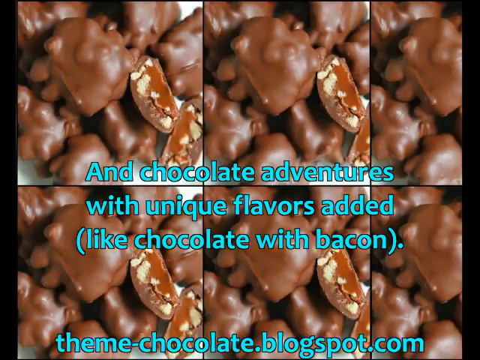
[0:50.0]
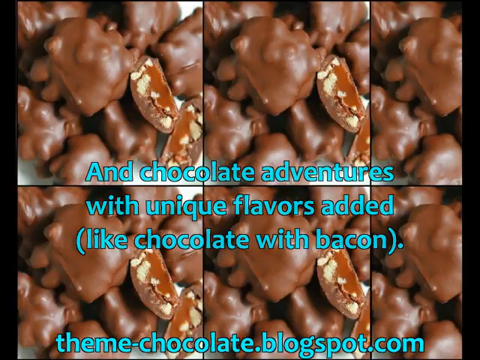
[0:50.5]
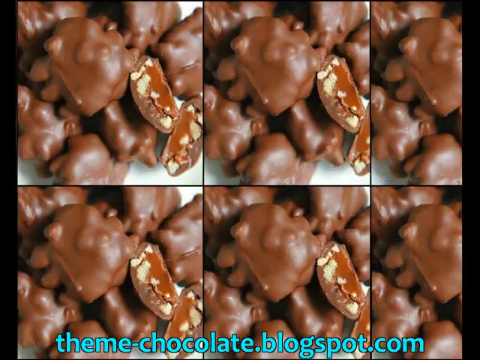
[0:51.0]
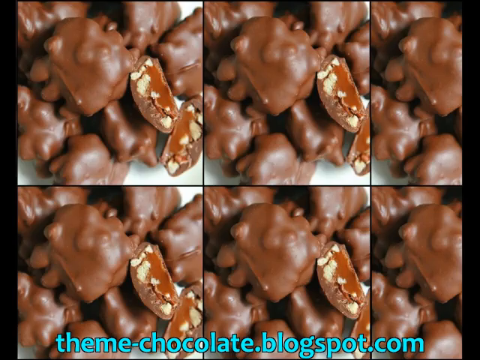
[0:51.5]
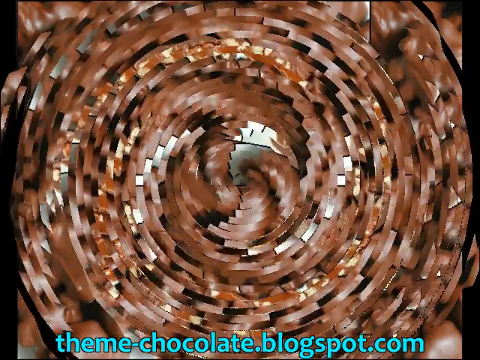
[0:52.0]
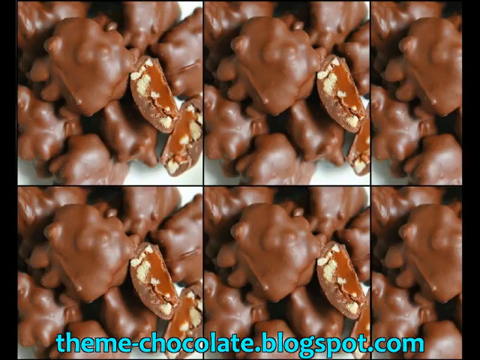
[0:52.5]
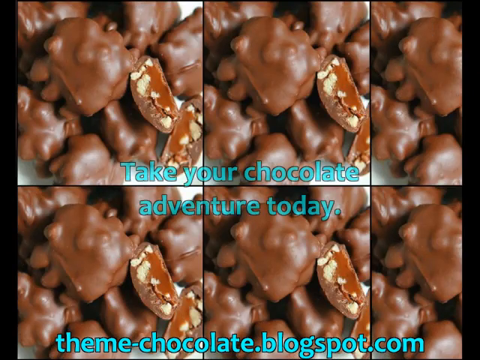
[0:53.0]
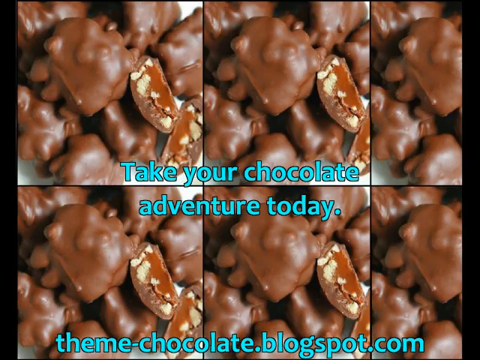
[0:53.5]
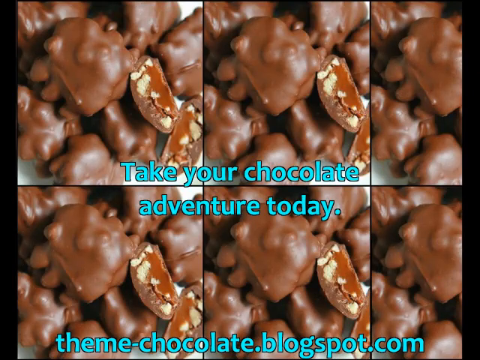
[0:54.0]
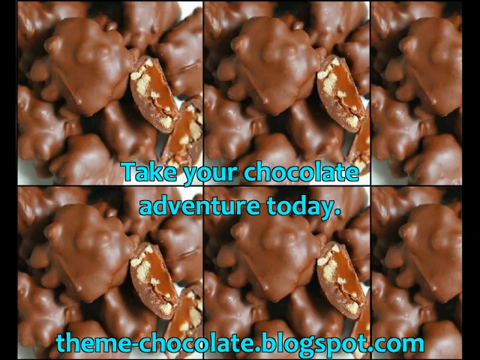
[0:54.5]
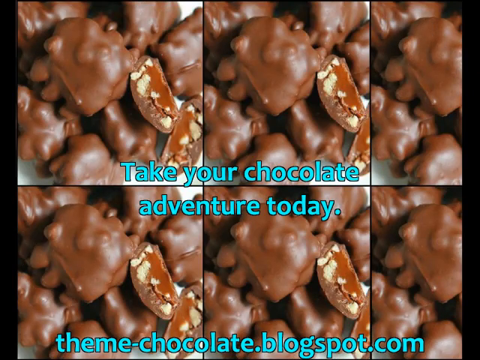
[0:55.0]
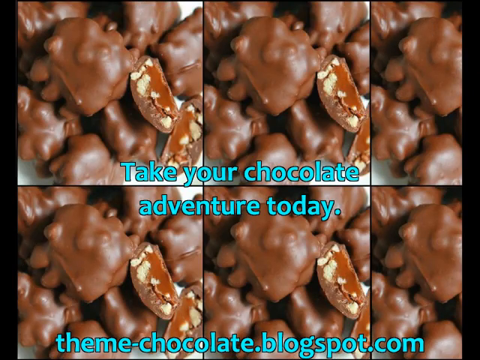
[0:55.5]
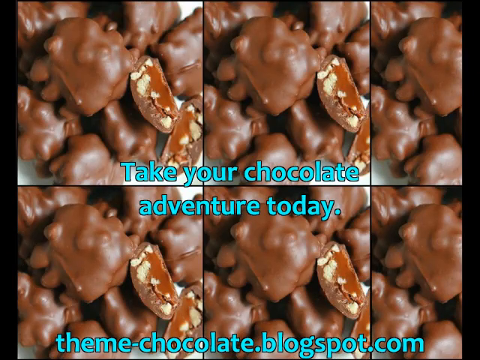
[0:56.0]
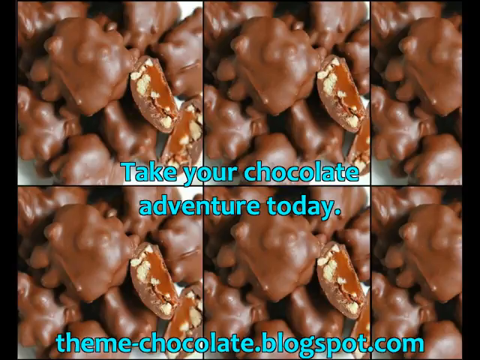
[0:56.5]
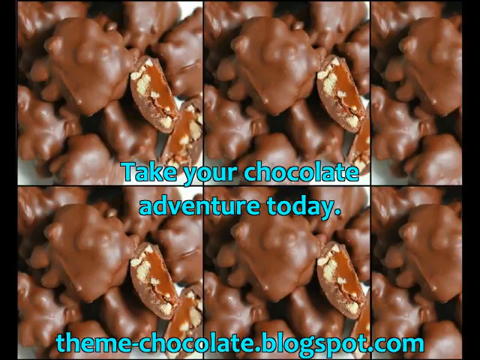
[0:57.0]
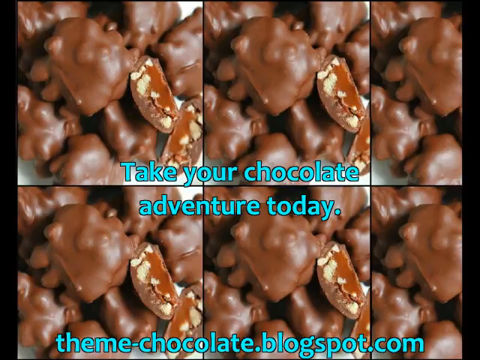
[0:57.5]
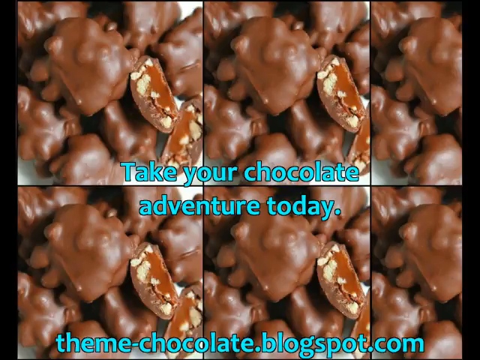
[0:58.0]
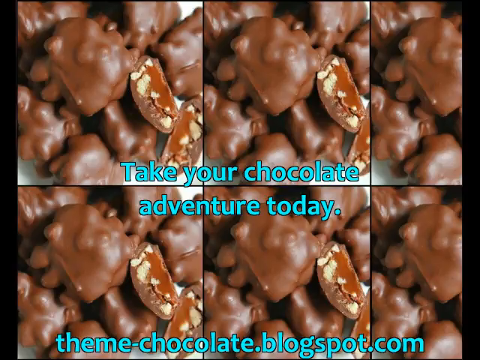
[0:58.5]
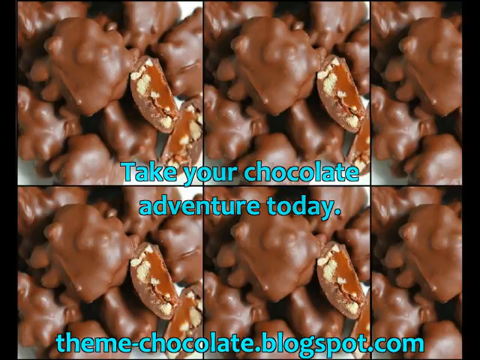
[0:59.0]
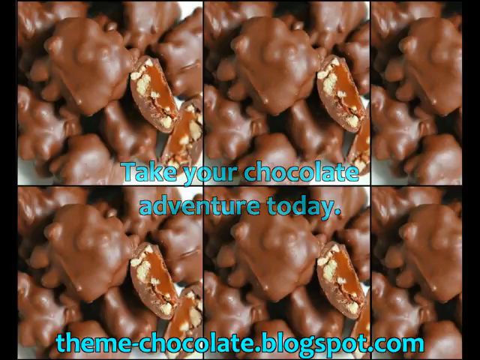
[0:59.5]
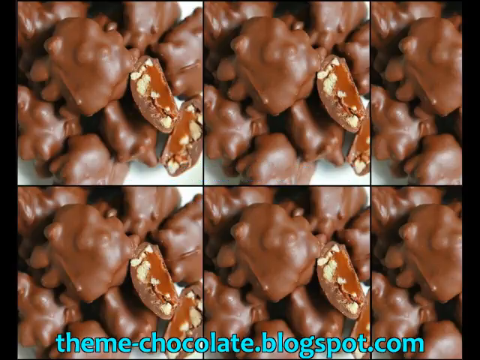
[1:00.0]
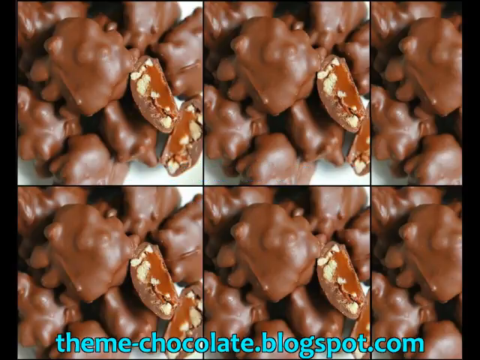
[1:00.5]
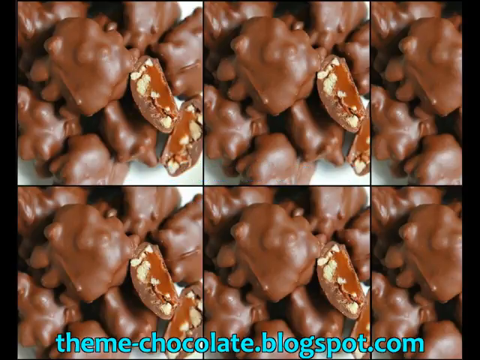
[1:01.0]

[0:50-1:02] A collage of six repeated identical images of chocolates fills the screen. Some of the chocolates are whole and sort of roundish, while others are sliced in half, showing their insides. Green text across the middle of the screen reads, "and chocolate adventures with unique flavors added like chocolate with bacon." After about a second, the screen transitions with an effect that repeats the same image, and the text changes to new green text reading, "take your chocolate adventure today." This stays on screen for about three seconds until the text disappears.